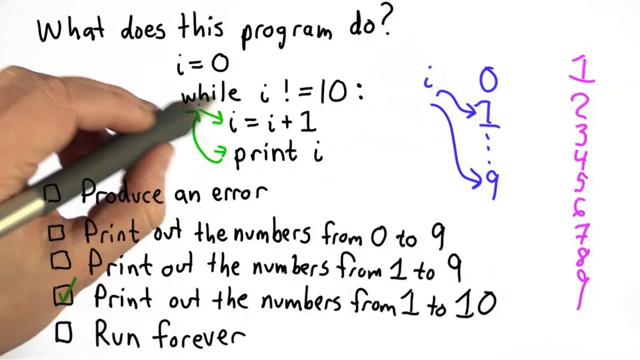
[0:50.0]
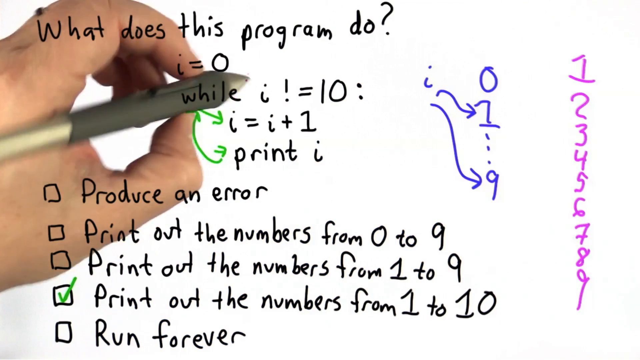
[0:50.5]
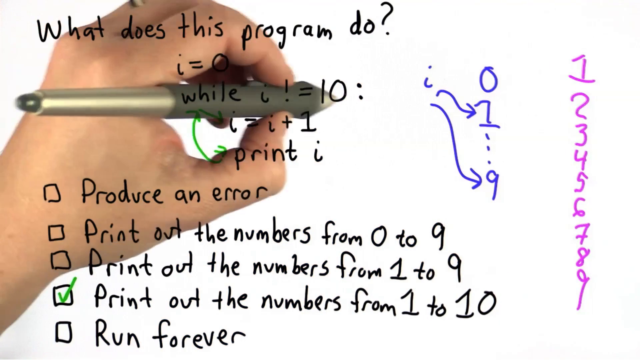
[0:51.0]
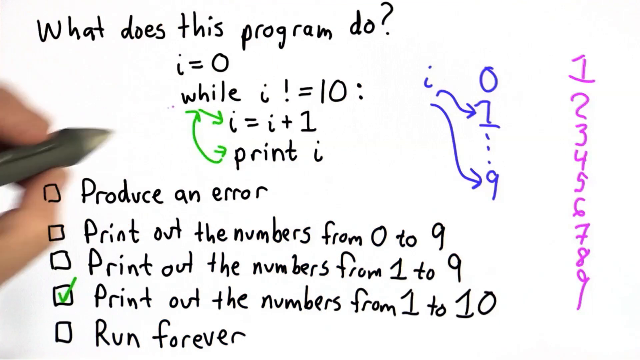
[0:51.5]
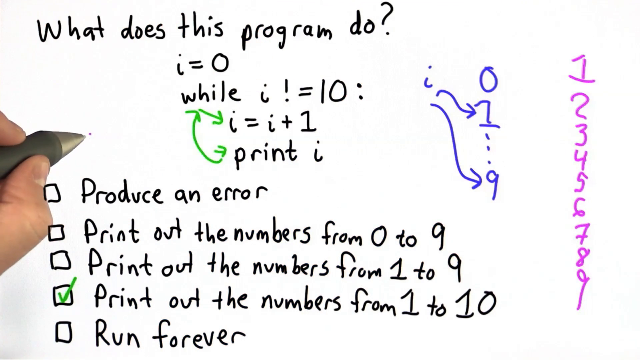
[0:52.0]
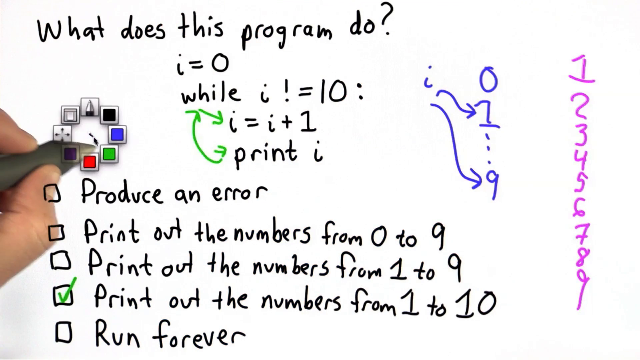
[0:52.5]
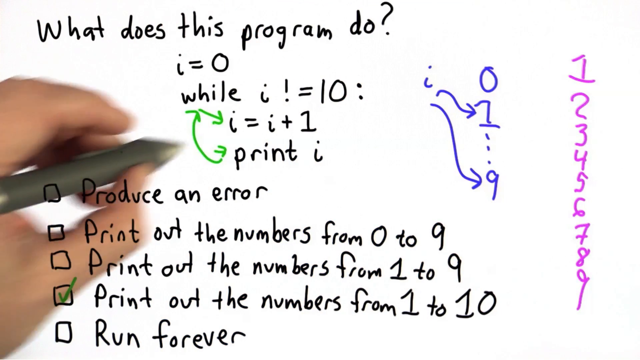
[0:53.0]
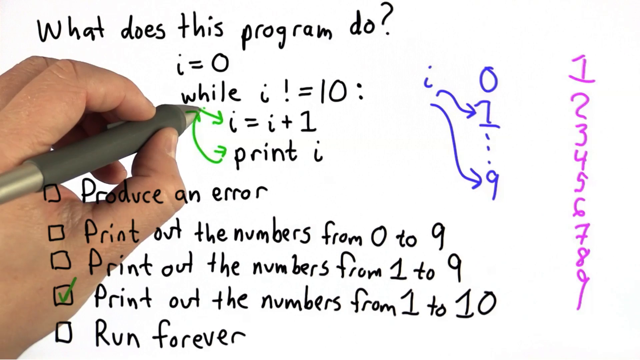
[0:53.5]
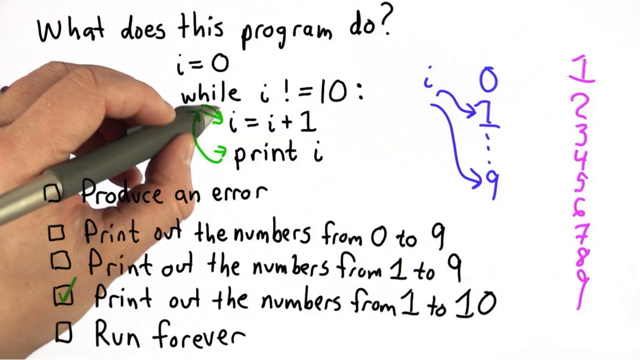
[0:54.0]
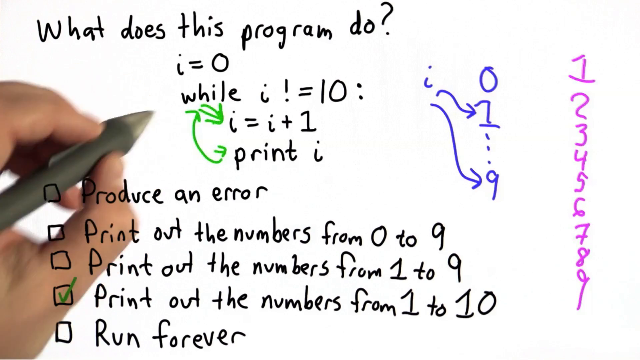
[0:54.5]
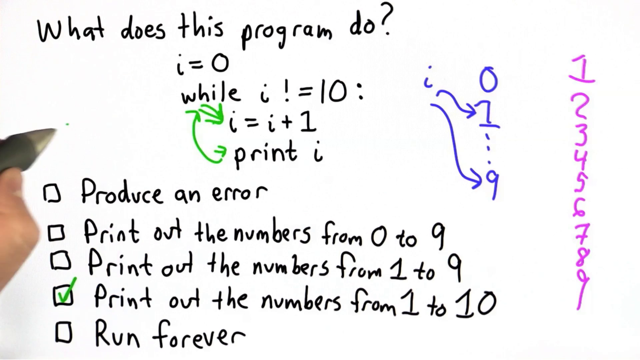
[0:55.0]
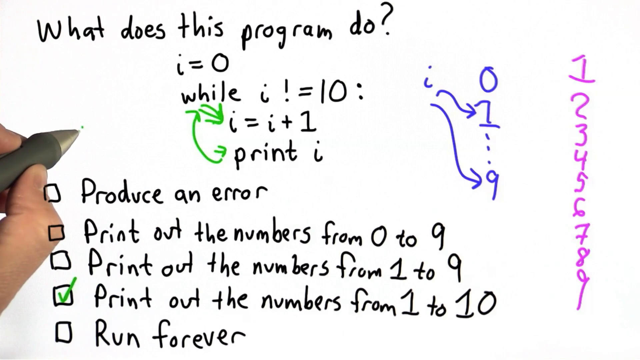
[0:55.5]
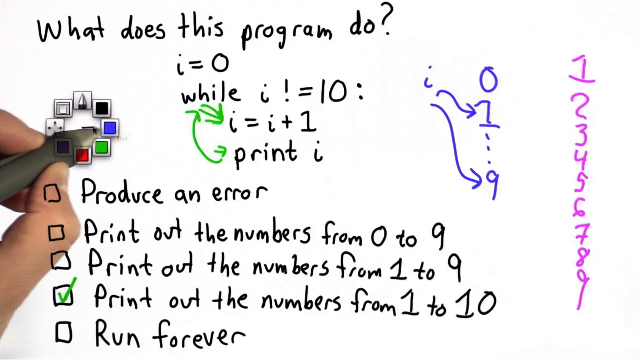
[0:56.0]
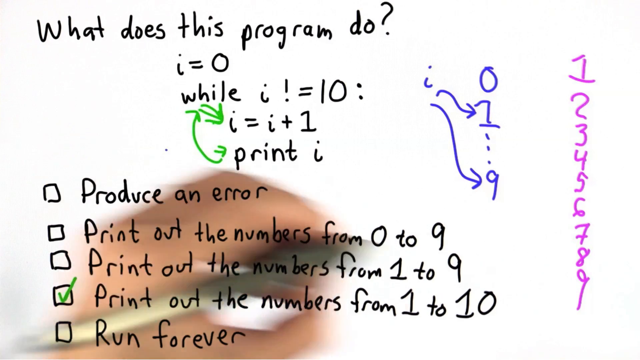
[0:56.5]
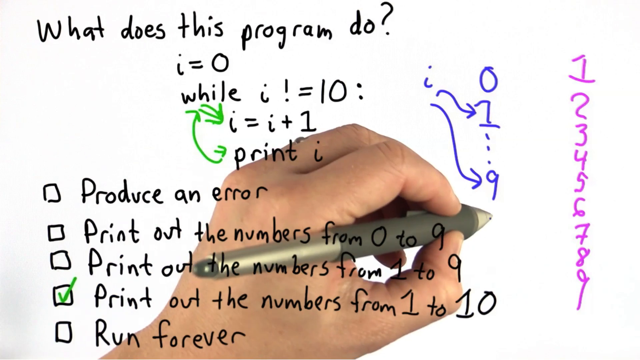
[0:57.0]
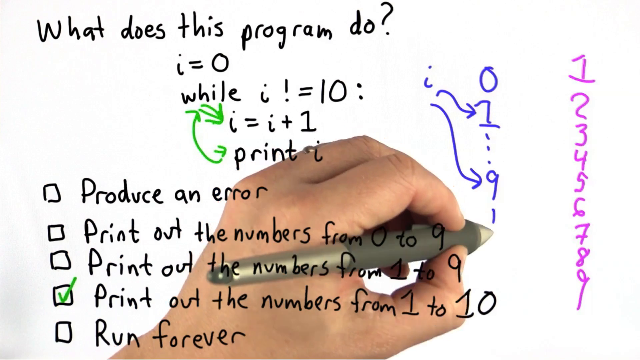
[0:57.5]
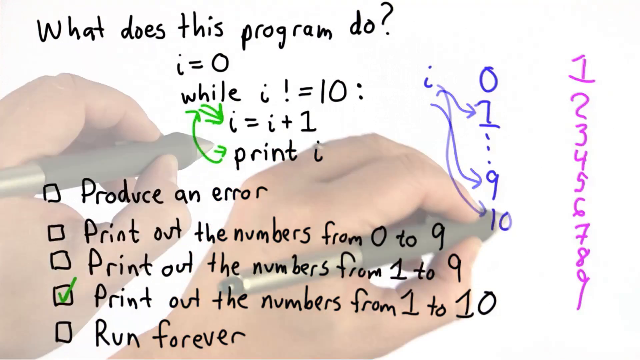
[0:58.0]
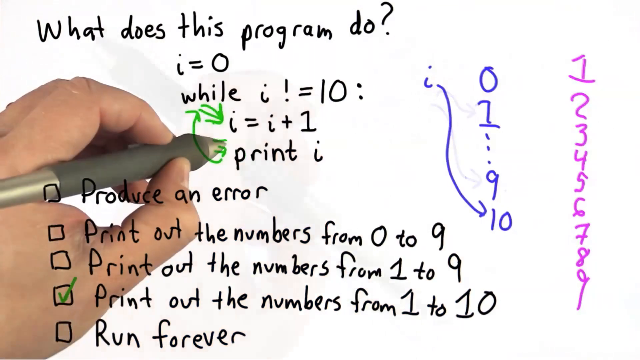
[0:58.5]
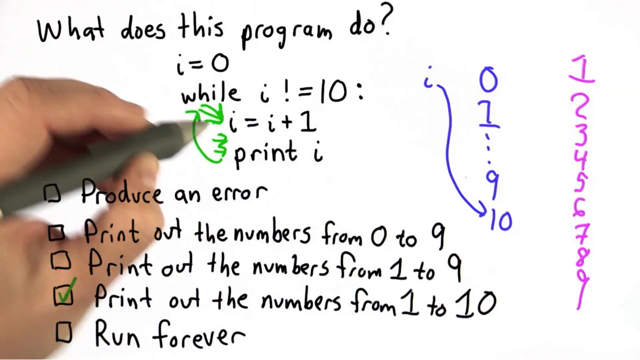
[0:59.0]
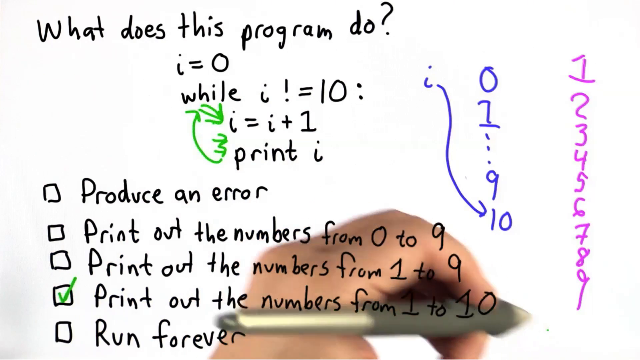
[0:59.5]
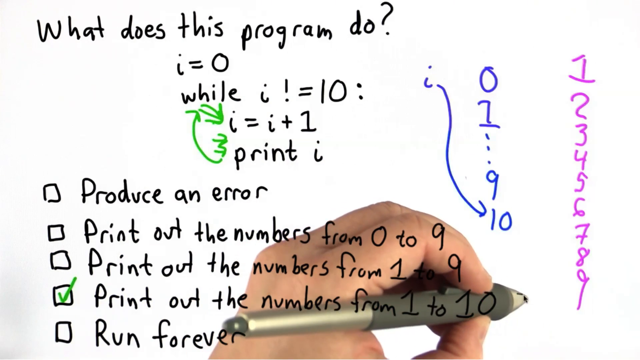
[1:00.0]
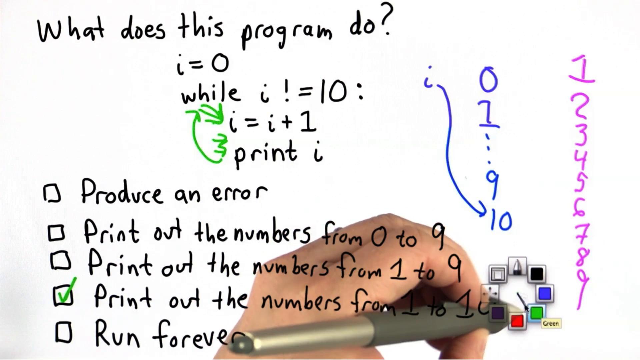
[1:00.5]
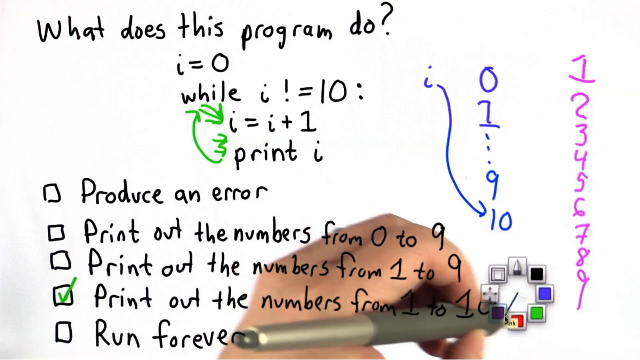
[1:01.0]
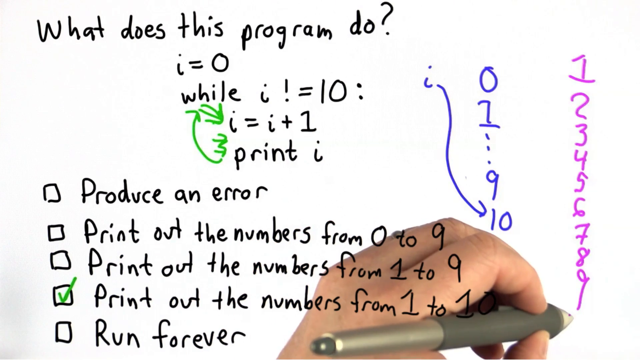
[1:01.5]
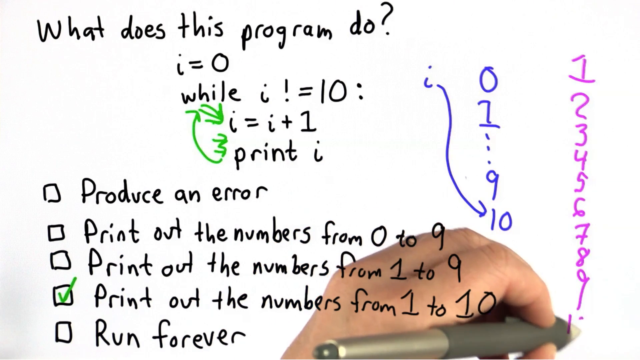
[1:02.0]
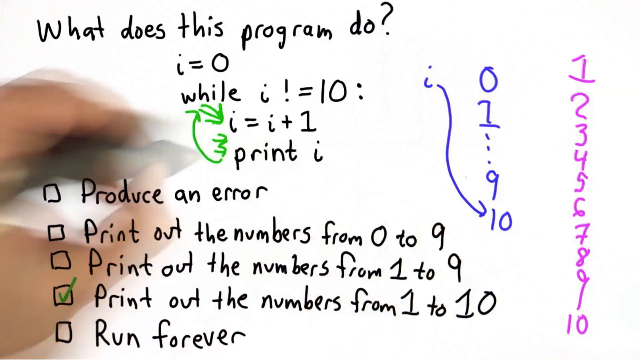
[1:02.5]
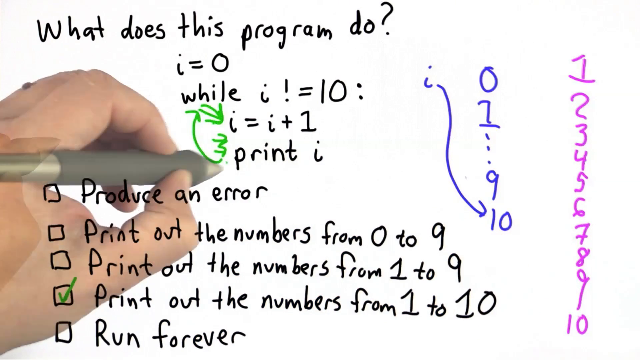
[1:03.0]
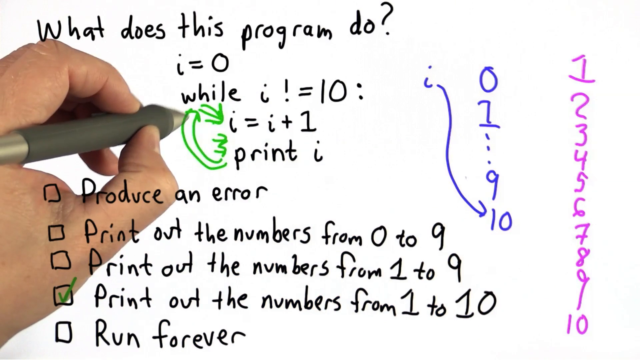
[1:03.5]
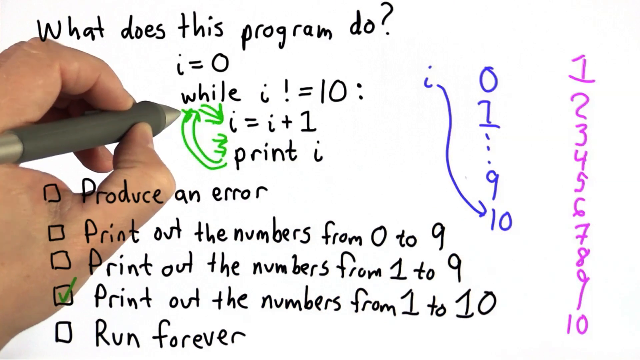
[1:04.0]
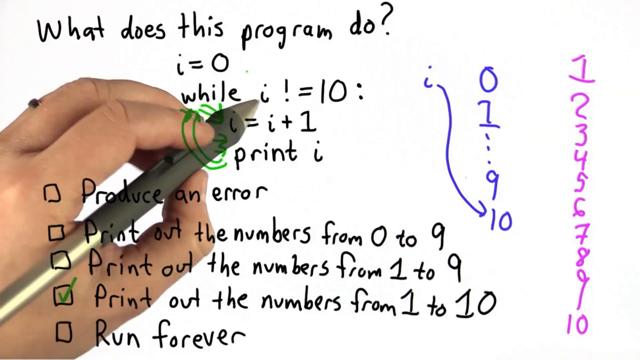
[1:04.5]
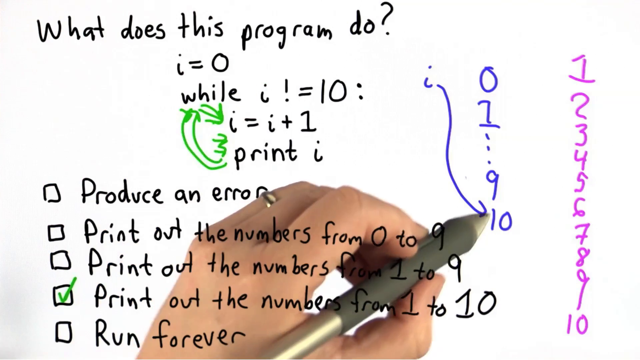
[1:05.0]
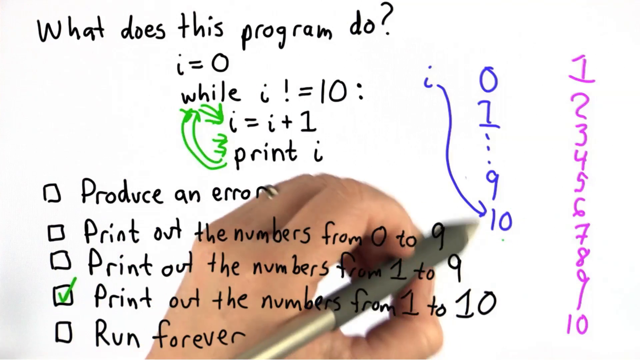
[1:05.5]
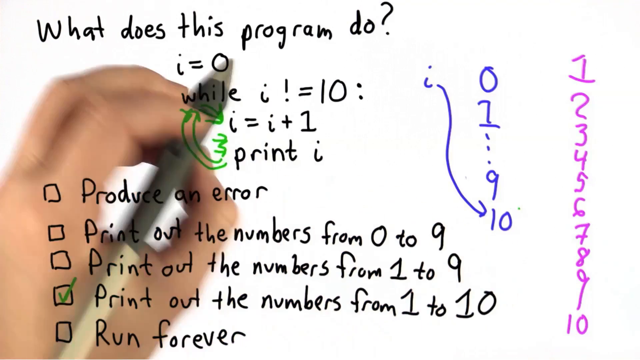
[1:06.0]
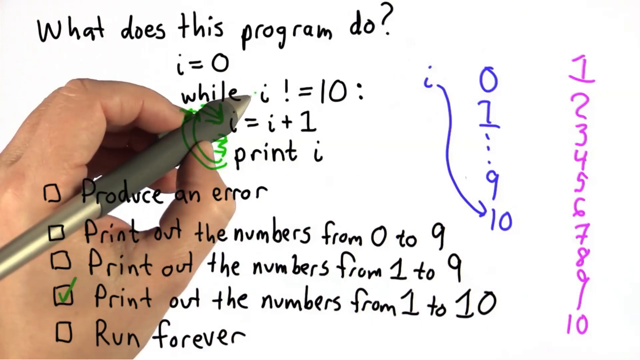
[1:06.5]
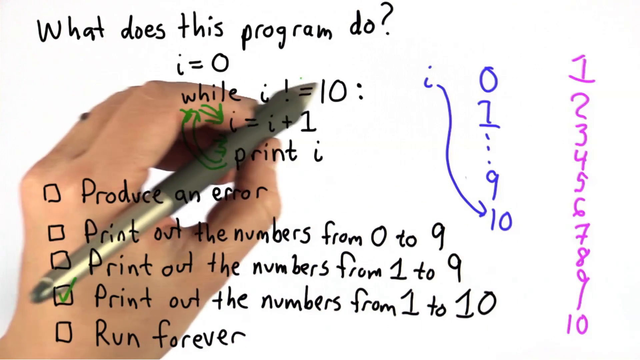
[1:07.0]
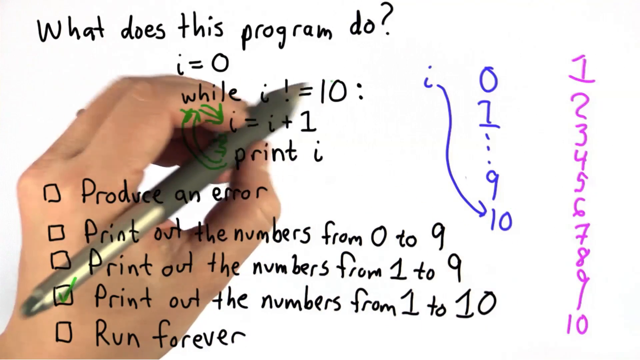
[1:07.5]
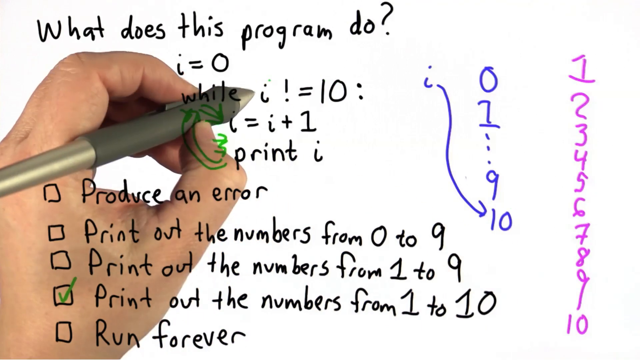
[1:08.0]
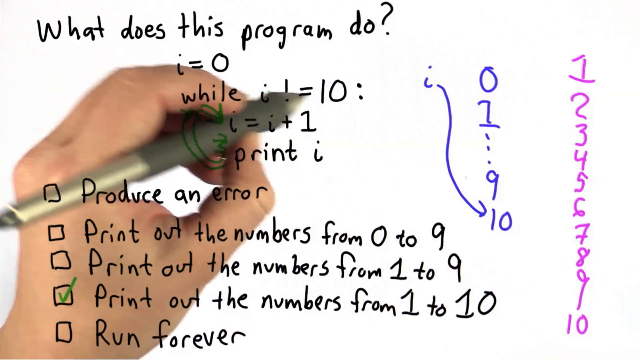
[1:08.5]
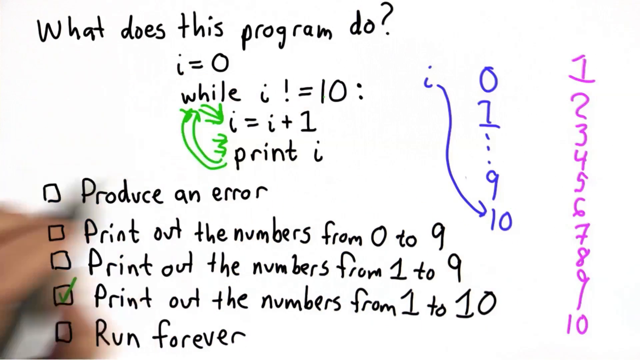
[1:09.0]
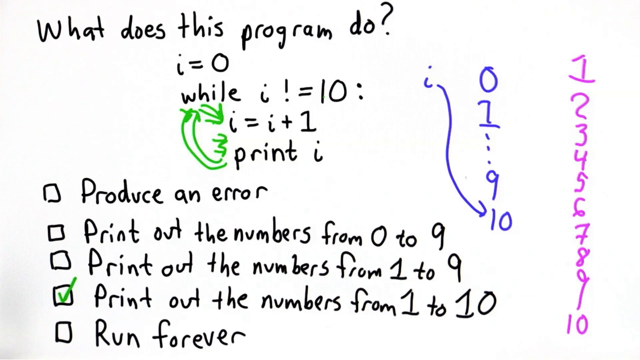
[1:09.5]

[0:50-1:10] The white page shows the handwritten question in black pen: "what does this program do? i = nought while i != 10: i = i + 1 print i". Hand-drawn boxes read "produce an error", "print out the numbers from nought to nine", "print out the numbers from one to nine", "print out the numbers from one to ten" and "run forever", with a green tick by the fourth box. On the right side of the page, in blue, are a small i, then a zero, a swirly arrow pointing to a blue one underneath the zero, three vertical dashes, and a swirly blue arrow from the blue small i down to a nine beneath the third dash. On the far right, in purple pen, the numbers one to nine run vertically. A green arrow goes from the "while" down to the small i beneath it, and a bendy arrow with arrowheads on both sides goes from the "while" down to the "print" below. The pen picks up the colour wheel, changes to green, and re-emphasises the arrow from "while" to the small i beneath it. Via the colour wheel the colour changes to blue, and the pen writes the number 10 below the blue 9 on the right, with a new bendy arrow from the blue small i down to the 10. In green, another small arrow is added above the bendy arrow. The colour wheel changes the colour to purple, and a 10 is added in purple after the purple 9. Another green arrow goes from "print" up to "while". The pen circles the blue 10 without leaving a mark, then points to the "while i != 10" line.